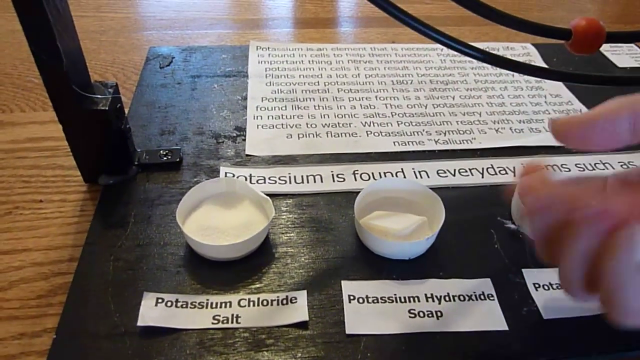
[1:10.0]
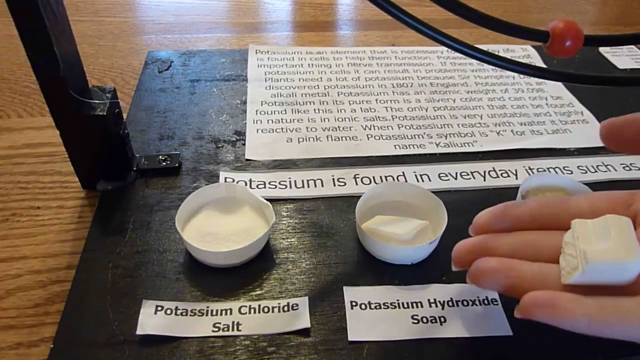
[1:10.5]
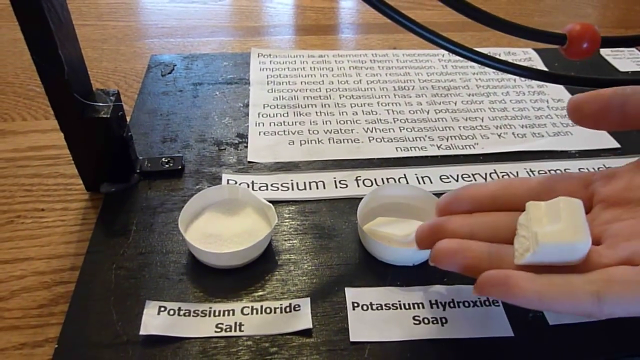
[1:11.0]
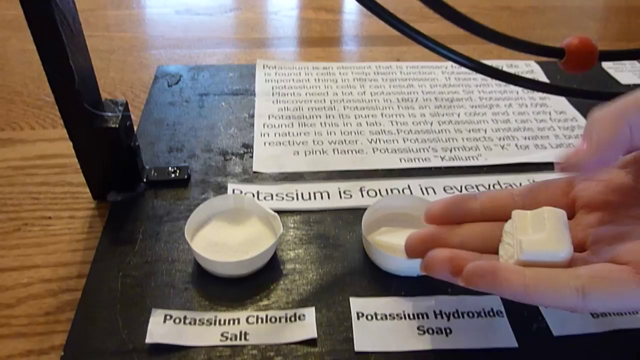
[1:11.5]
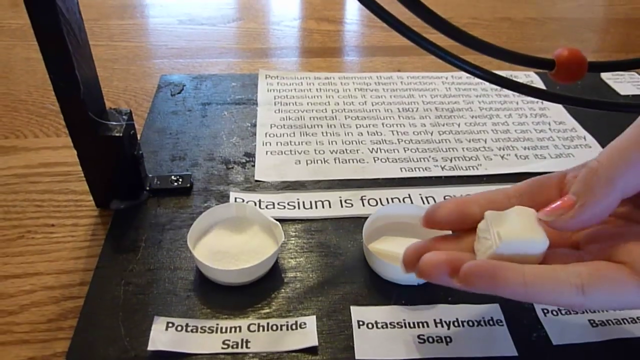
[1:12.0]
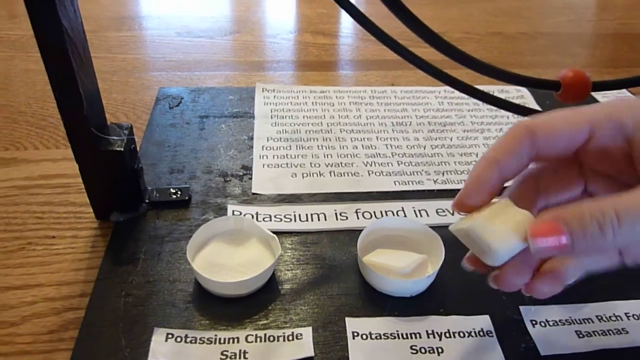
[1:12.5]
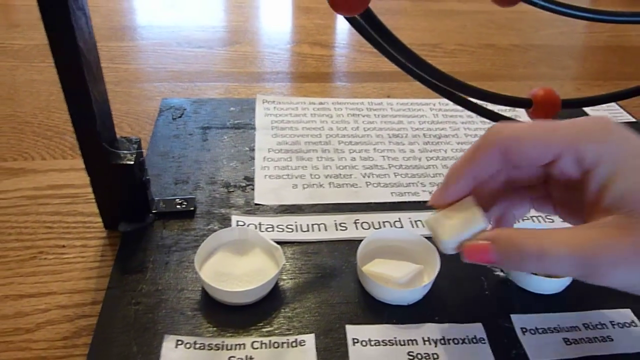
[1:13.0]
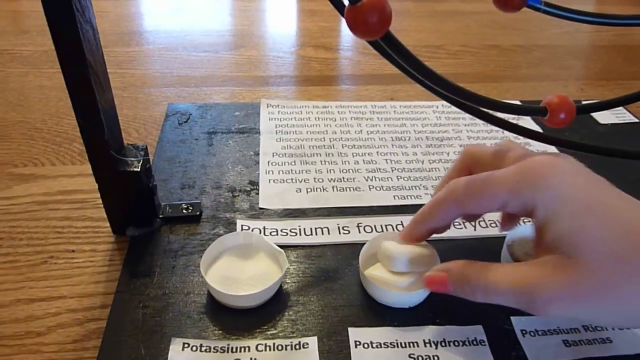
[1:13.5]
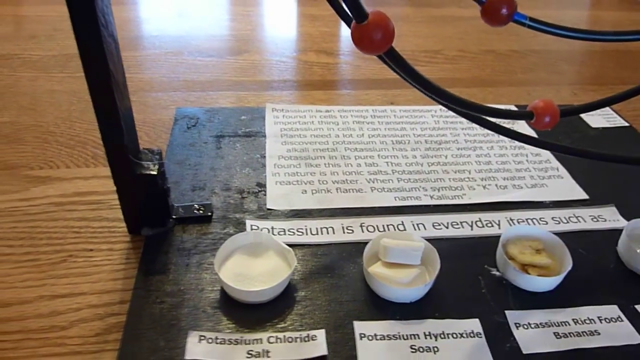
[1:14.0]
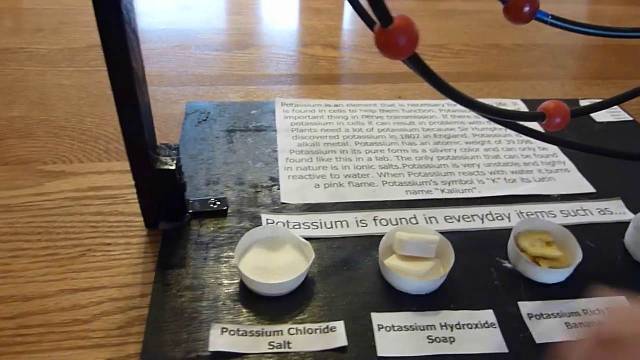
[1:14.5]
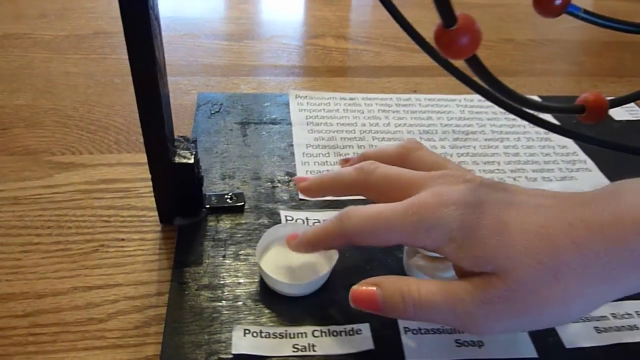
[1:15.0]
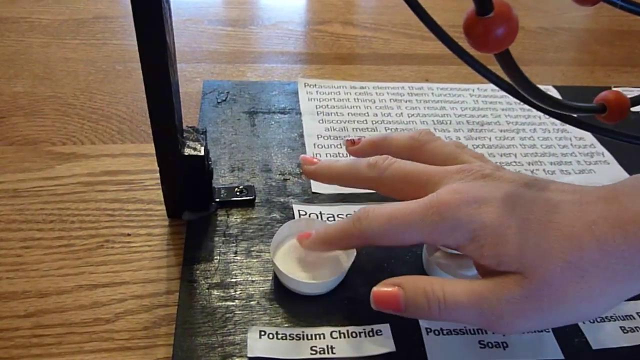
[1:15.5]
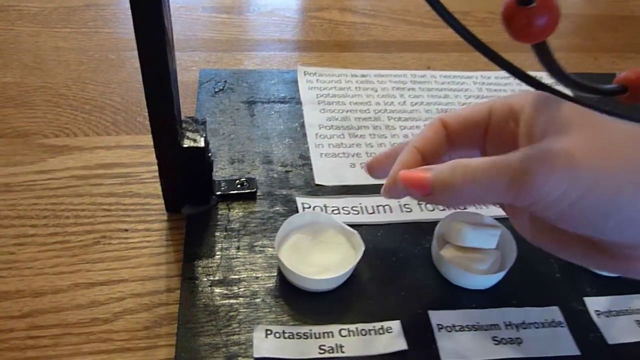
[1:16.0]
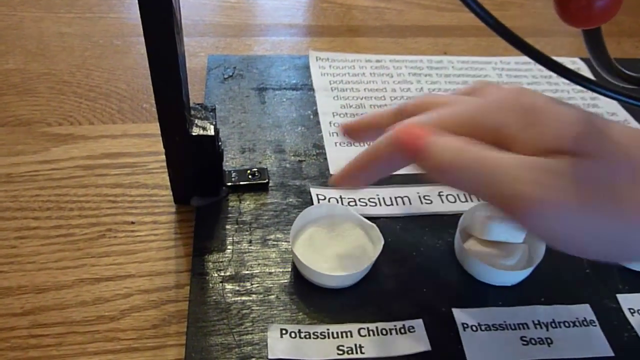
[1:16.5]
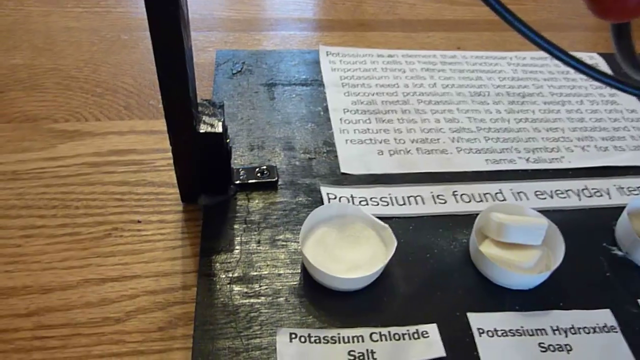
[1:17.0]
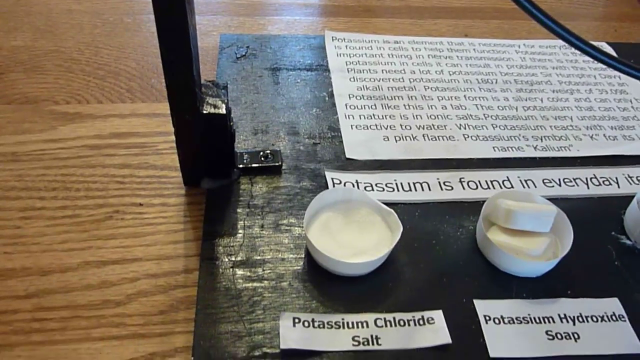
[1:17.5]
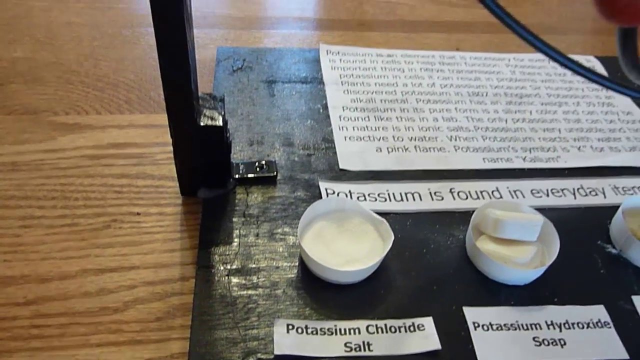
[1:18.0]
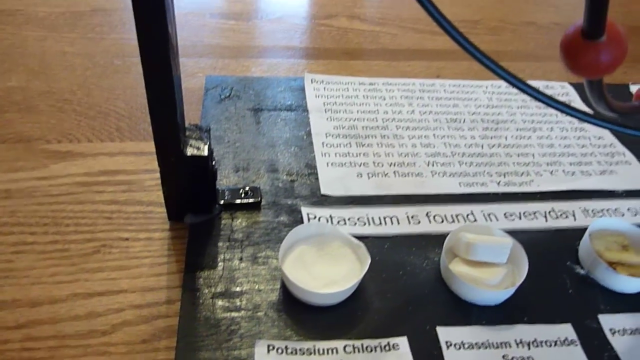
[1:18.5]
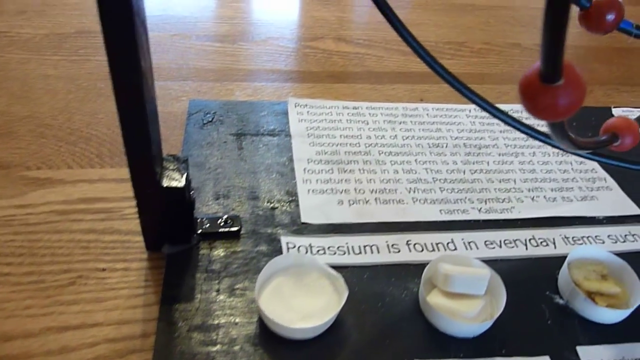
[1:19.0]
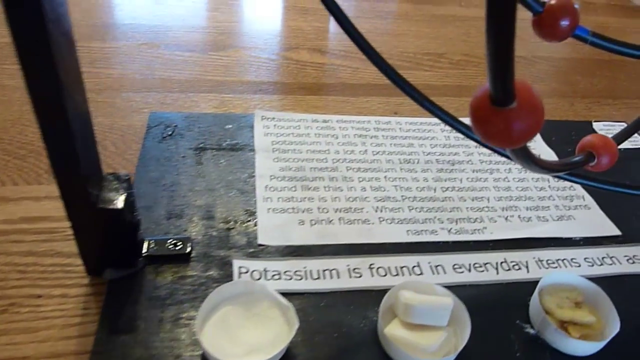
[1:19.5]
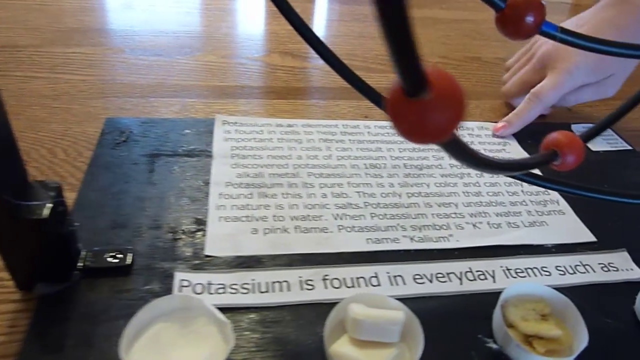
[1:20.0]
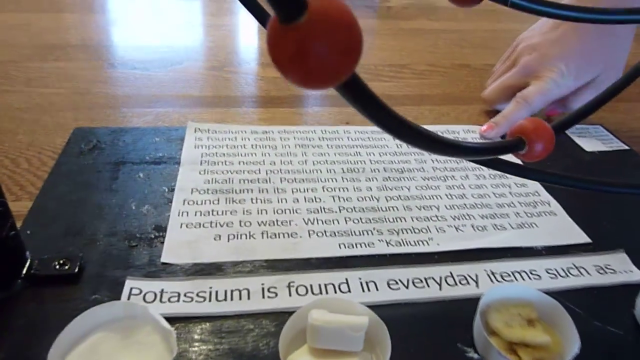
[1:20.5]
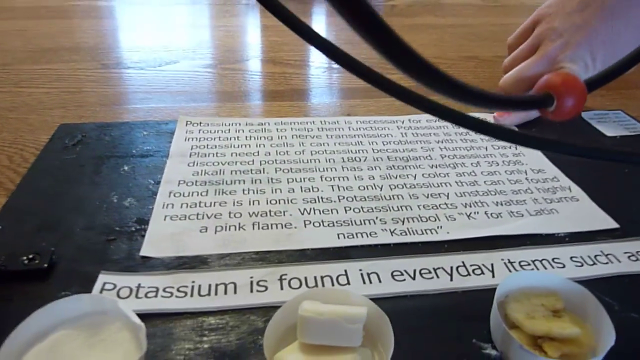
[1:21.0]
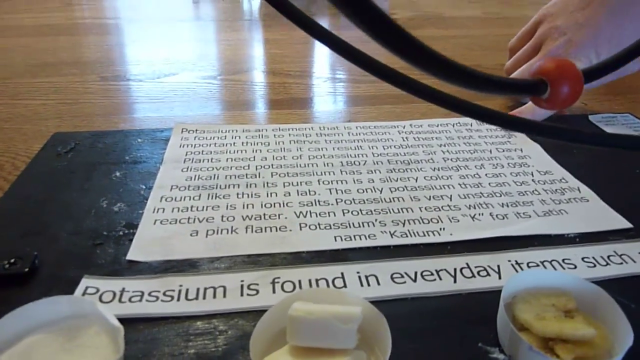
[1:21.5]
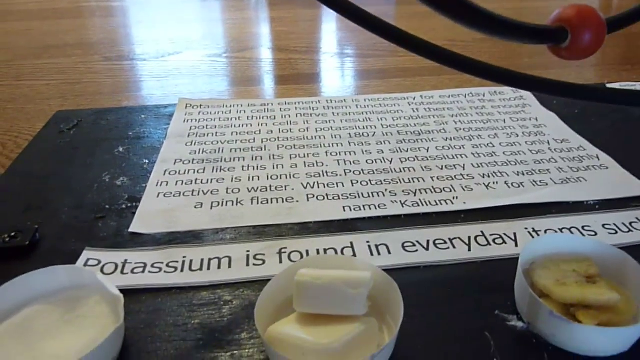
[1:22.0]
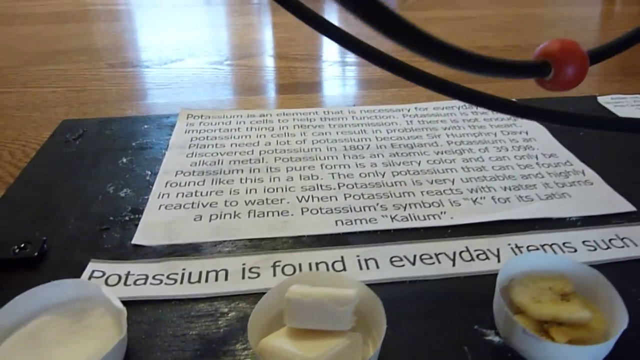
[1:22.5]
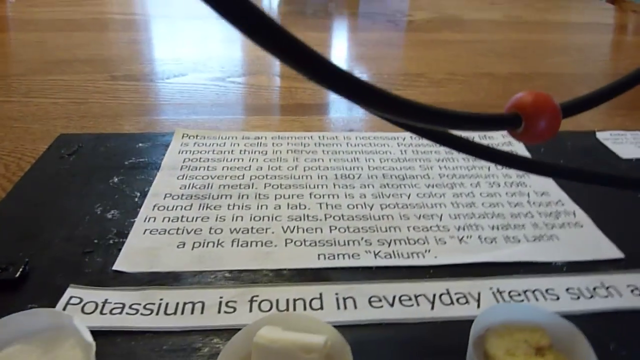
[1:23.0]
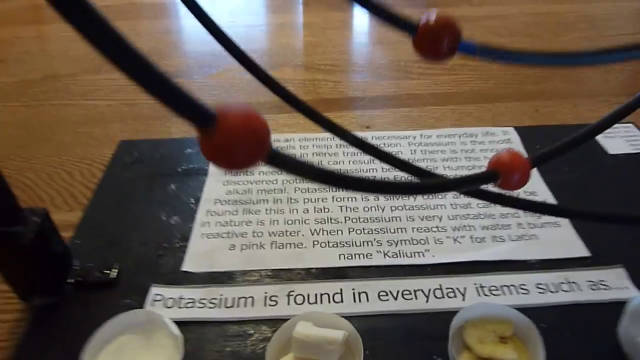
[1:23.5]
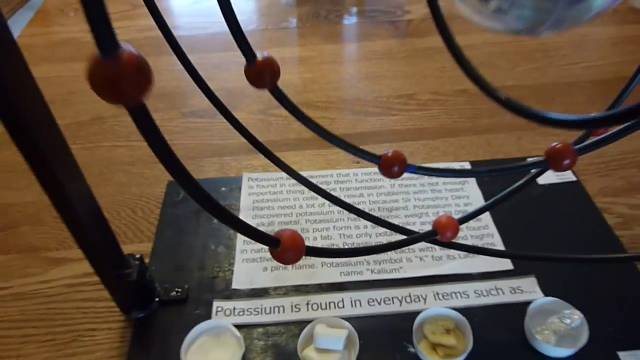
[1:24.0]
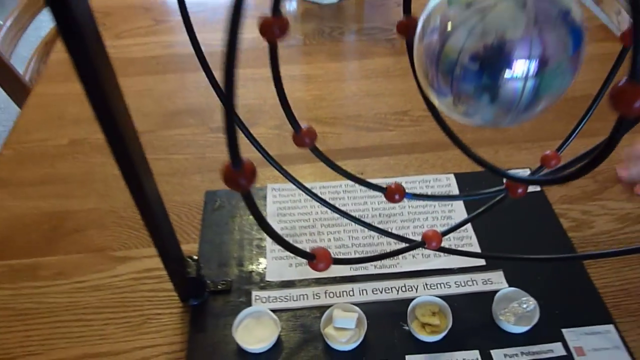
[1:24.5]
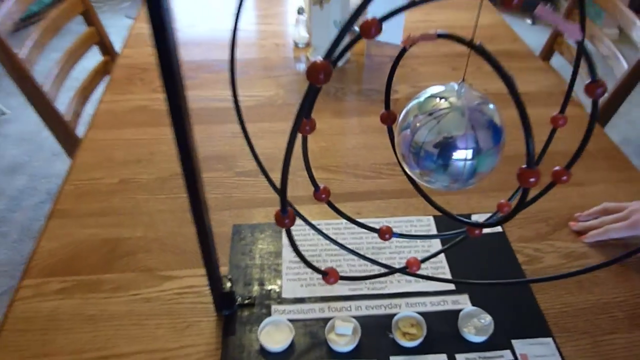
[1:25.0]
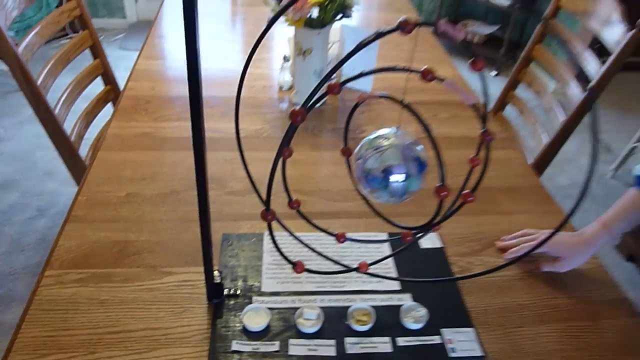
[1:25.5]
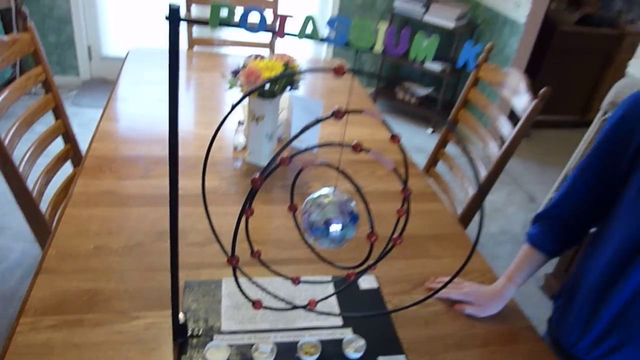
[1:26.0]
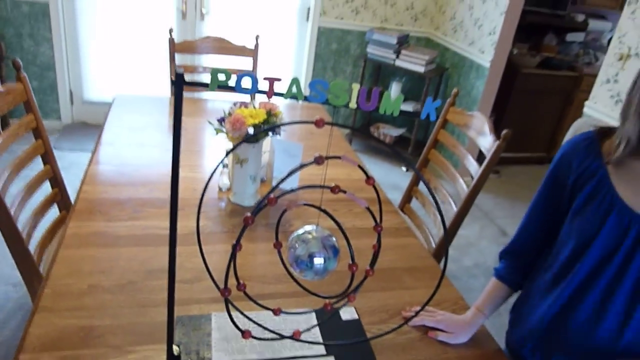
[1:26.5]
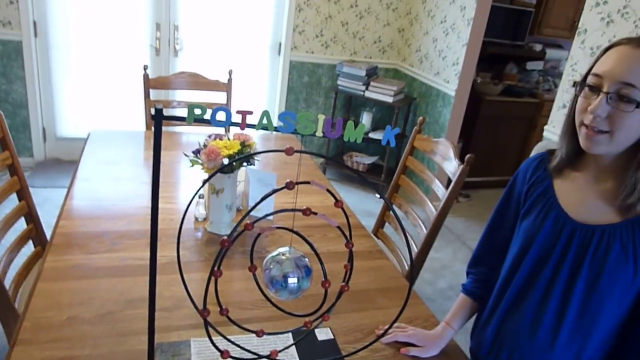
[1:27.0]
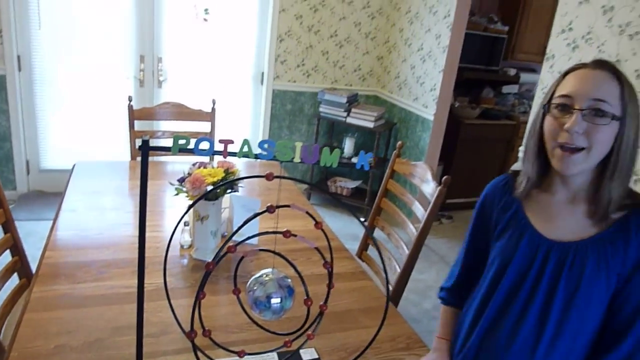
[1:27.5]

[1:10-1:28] The woman holds the soap potassium example, and then the camera zooms in a bit more on the text. Above where it says "potassium is found in everyday items, such as" there is a giant wall of text at the top, barely readable because of the angle. The little red parts on the circle model are clearly visible; they look like beads from a children's playset. The chloride salt is just salt, and the soap is a chopped-off bar of soap. The camera then lifts up and points toward the woman as the video finishes.